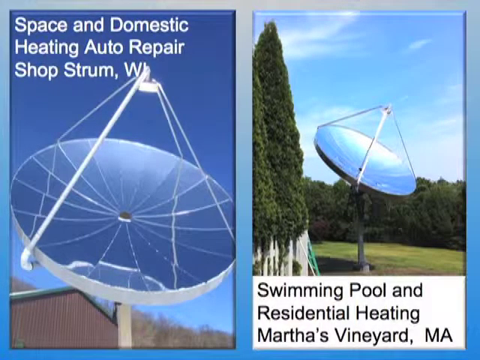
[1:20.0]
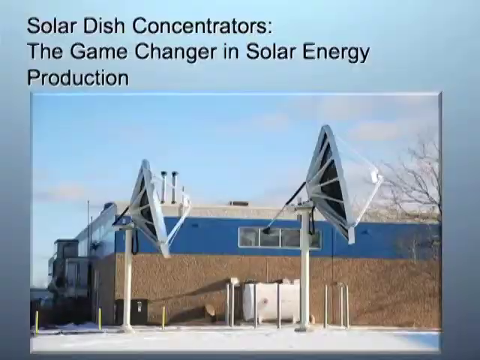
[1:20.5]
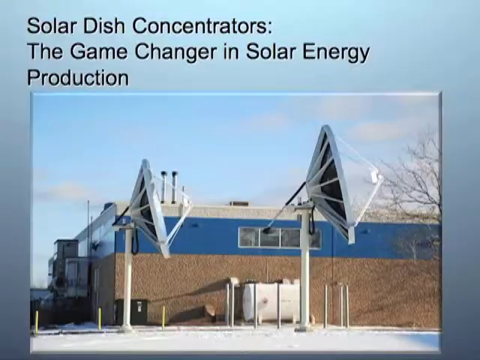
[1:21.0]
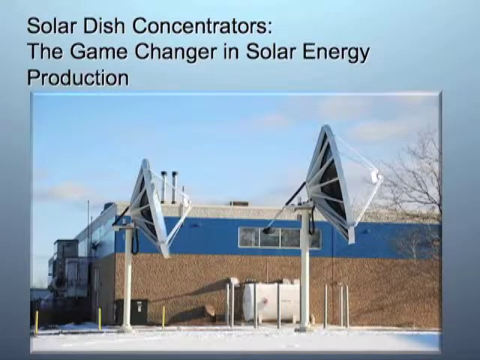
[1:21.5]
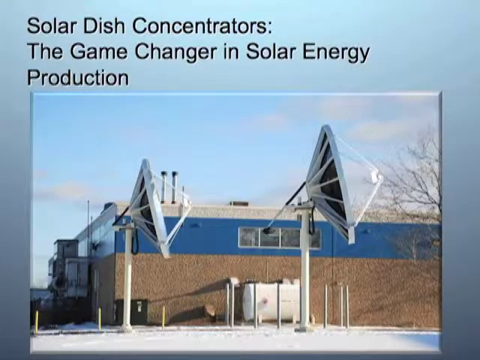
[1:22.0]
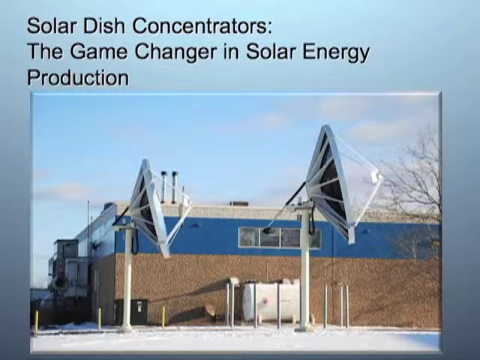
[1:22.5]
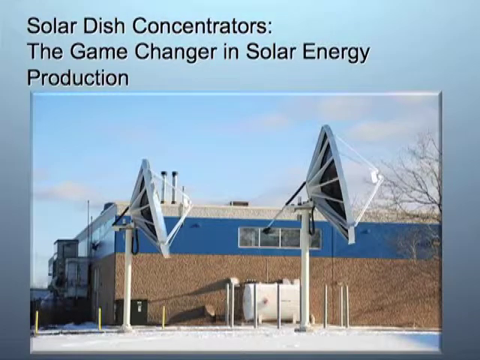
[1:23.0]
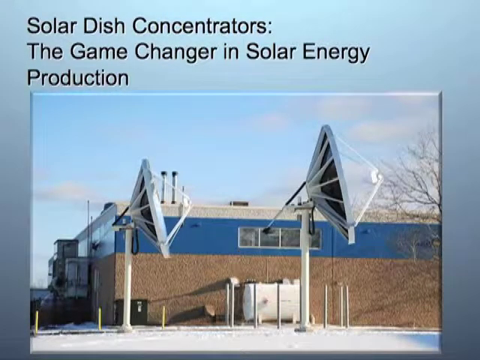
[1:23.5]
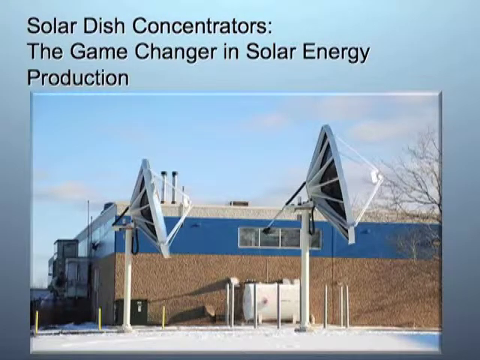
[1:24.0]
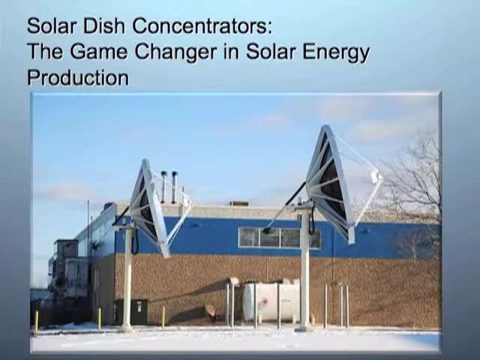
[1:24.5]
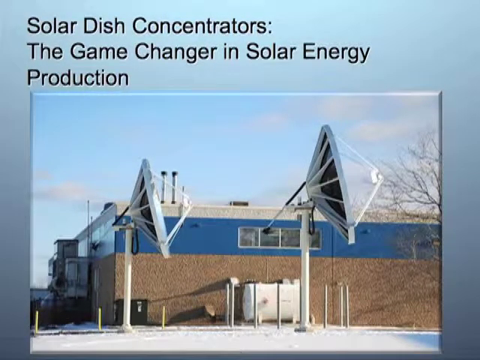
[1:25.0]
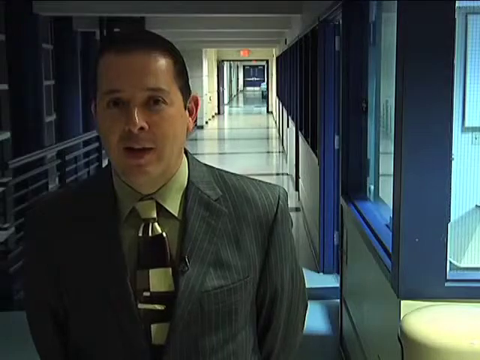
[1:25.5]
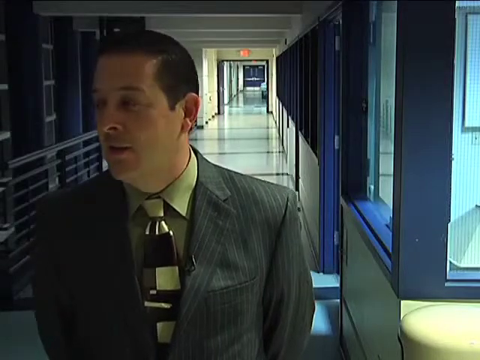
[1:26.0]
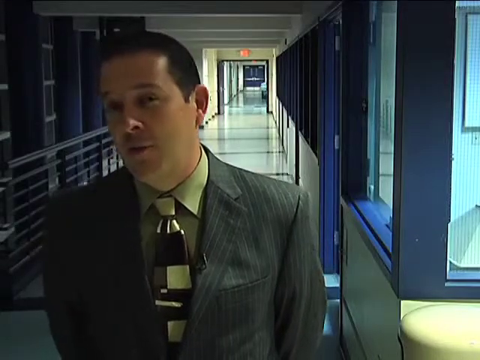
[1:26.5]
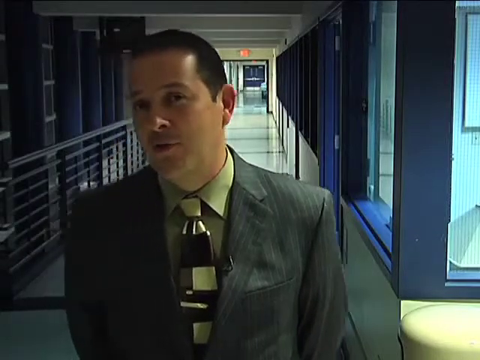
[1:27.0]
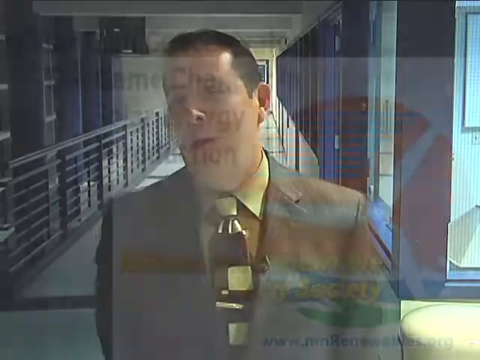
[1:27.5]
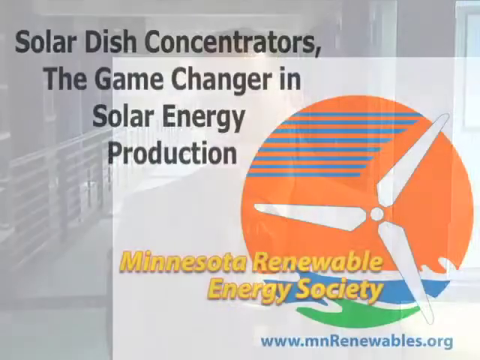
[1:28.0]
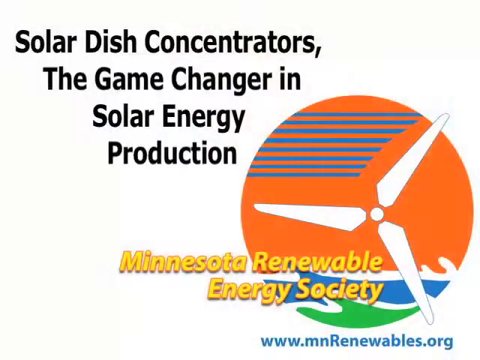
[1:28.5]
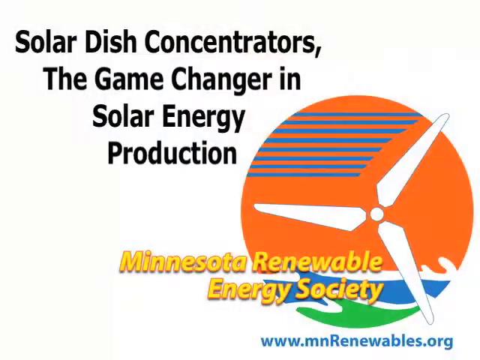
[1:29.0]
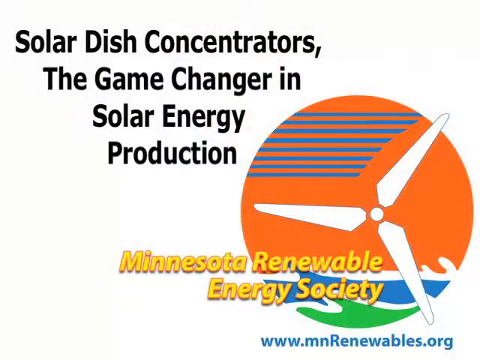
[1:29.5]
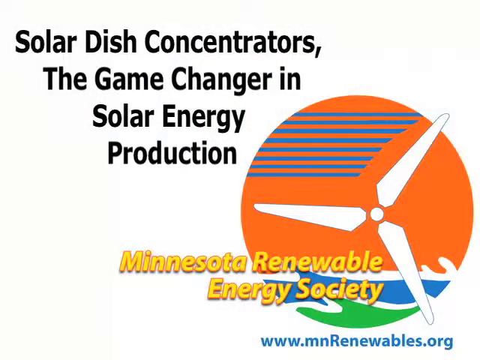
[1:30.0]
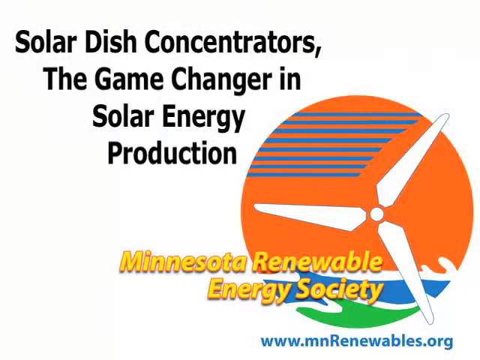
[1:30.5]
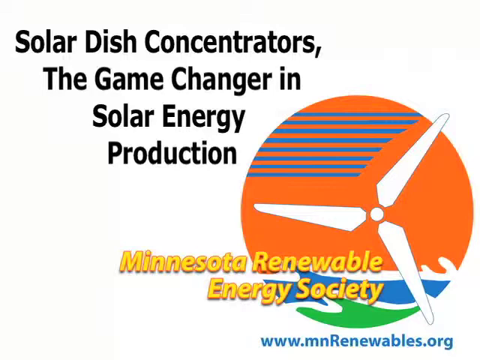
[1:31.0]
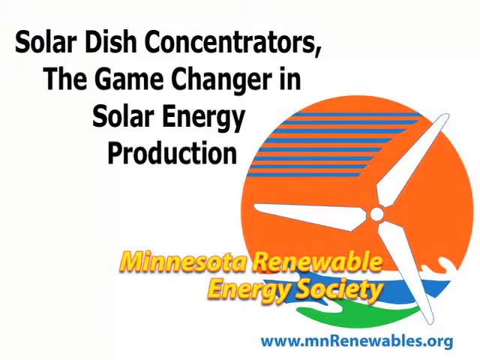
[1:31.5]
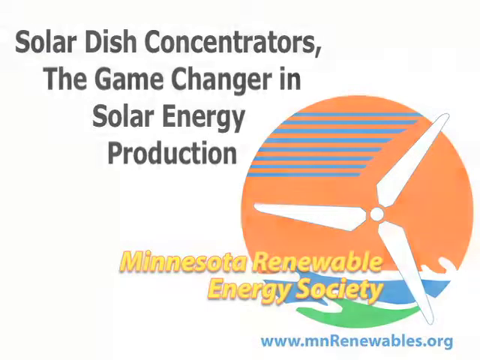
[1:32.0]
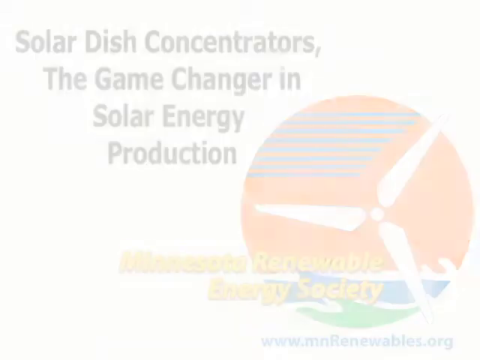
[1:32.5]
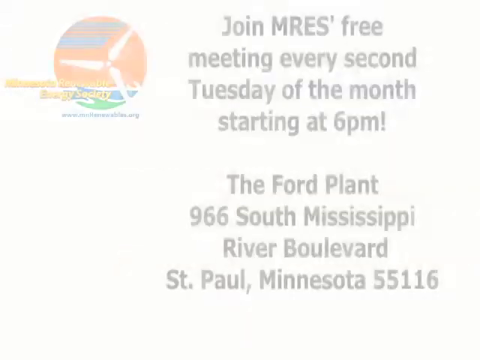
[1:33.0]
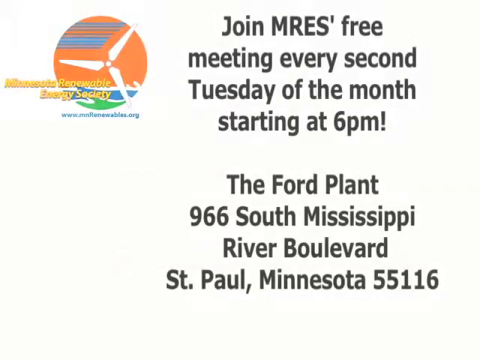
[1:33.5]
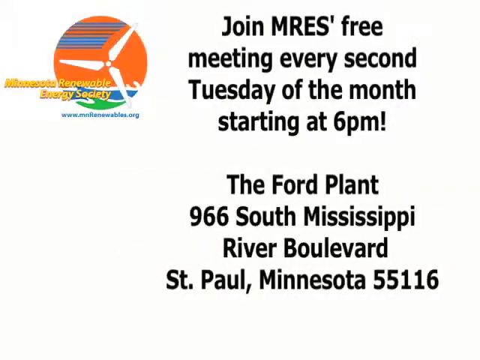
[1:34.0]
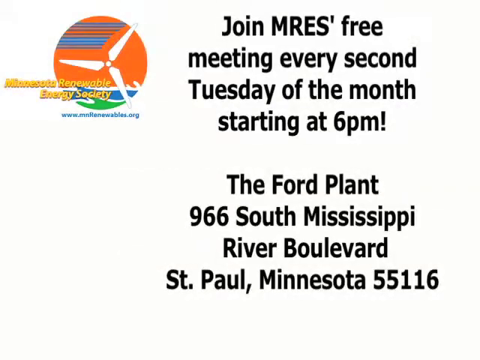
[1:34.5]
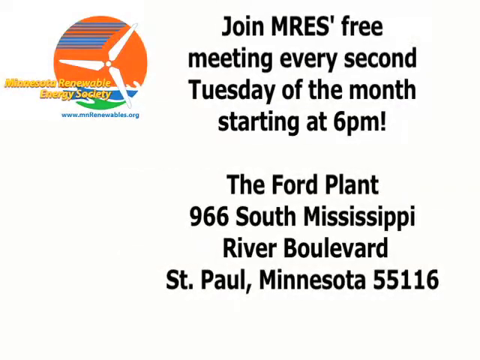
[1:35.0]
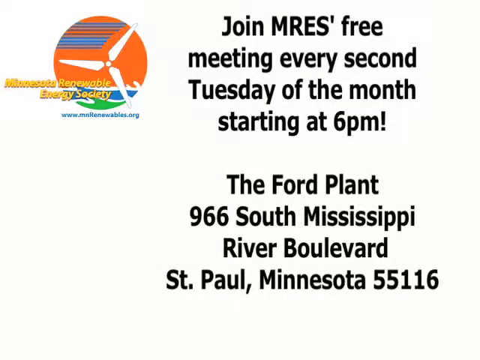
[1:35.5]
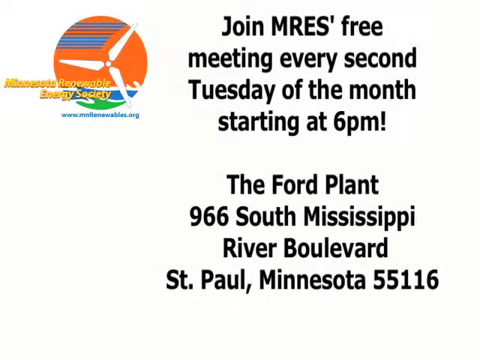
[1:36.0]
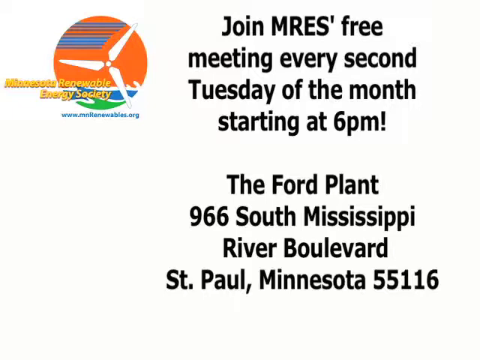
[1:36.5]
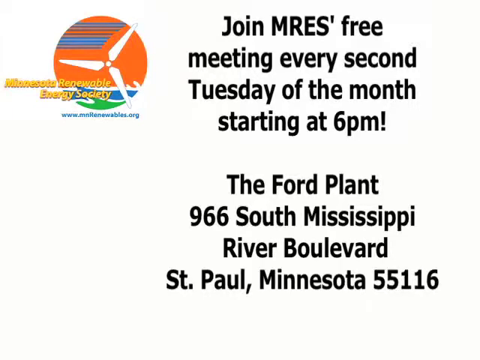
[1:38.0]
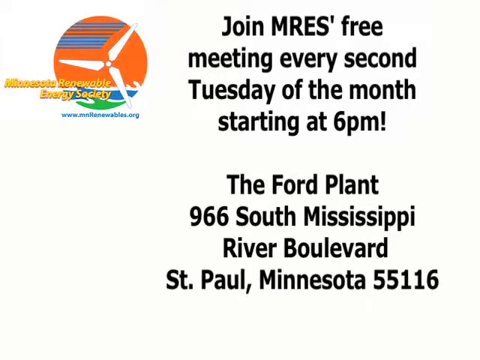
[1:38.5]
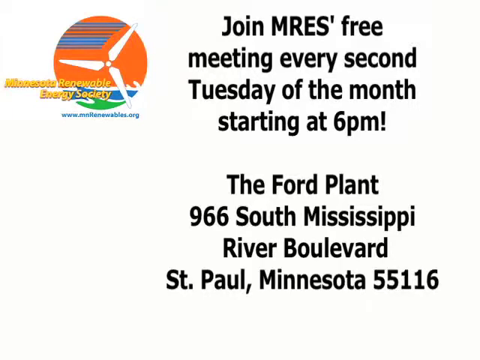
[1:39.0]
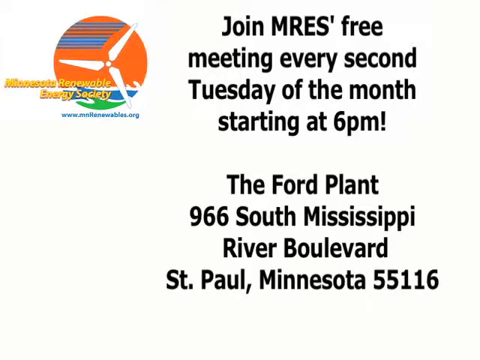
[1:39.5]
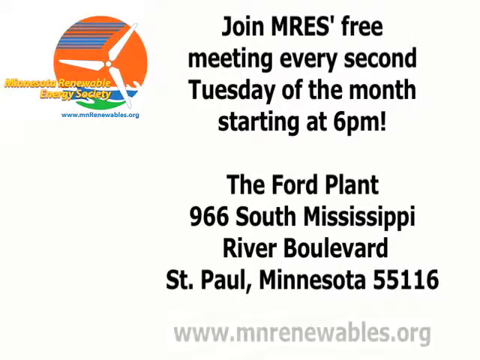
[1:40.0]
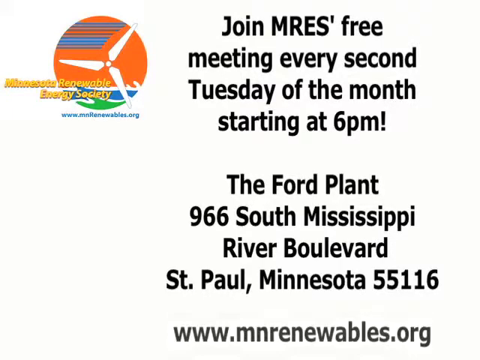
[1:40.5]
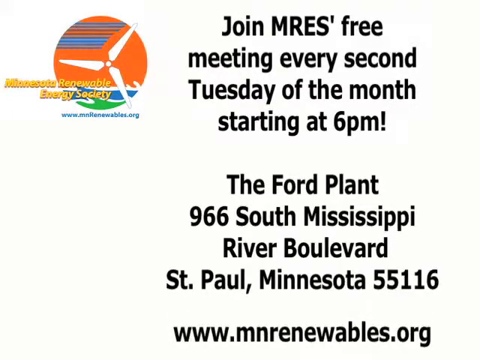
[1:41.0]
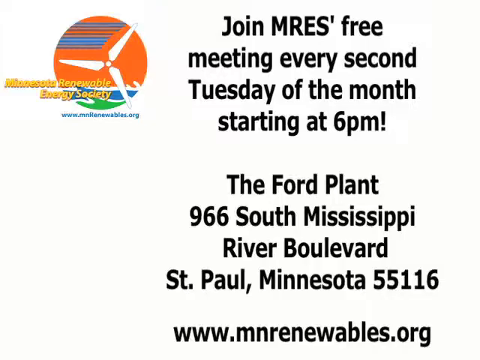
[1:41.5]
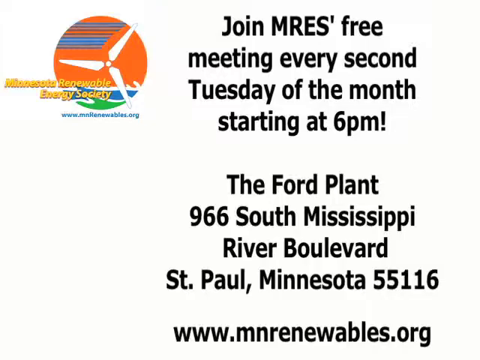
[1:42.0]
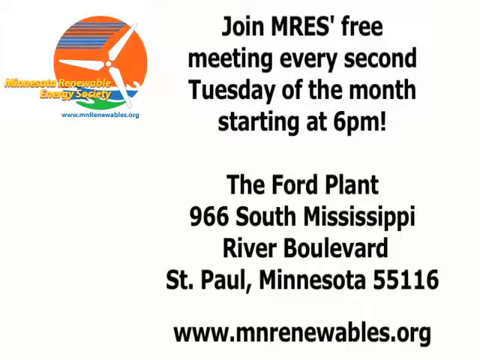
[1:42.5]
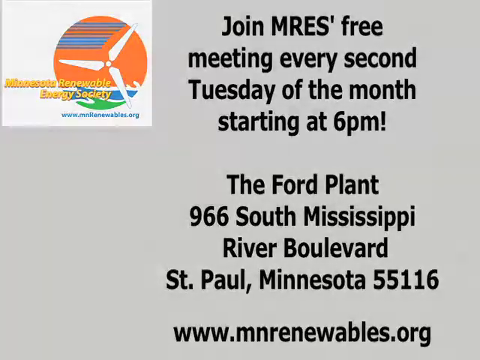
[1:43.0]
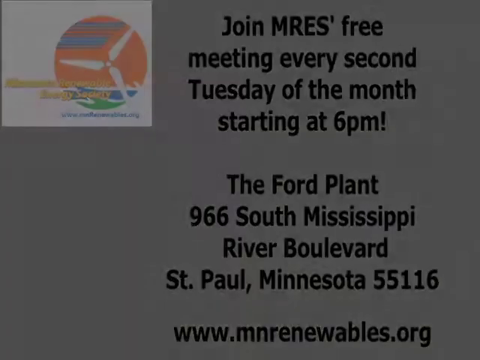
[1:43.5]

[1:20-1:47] The other solar dishes are shown for a brief second. Then text appears about solar dish concentrators as game changers for solar energy production, over a brown brick building with some blue paint on the outside and a couple of dishes next to it, photographed in daytime. The gentleman seen earlier appears again for just a second, talking very quickly with a neutral expression. Then the orange circle with the wings appears again; the illustration apparently represents a ceiling fan. The text about solar dish concentrators as game changers appears once again with "Minnesota Renewable Energy Society" and the URL "www.mnrenewables.org." The invitation for the MERS free meeting, held every second Tuesday of the month, shows up once again along with the URL.